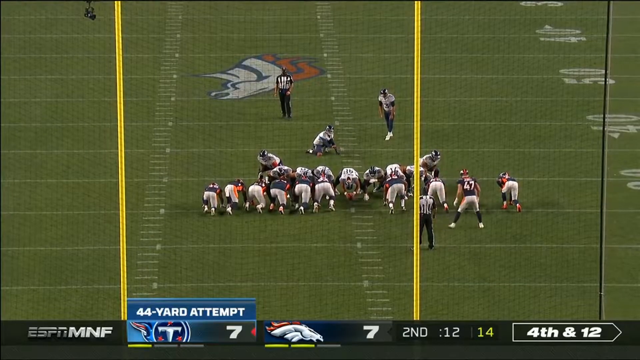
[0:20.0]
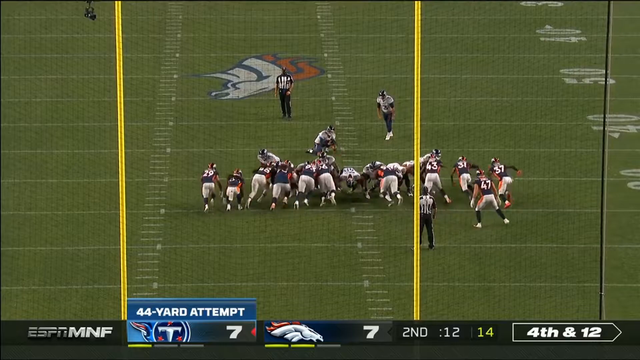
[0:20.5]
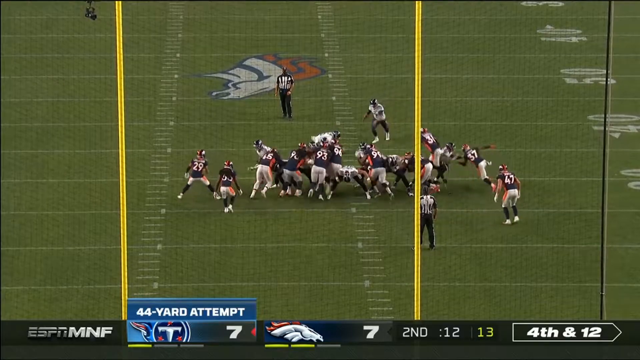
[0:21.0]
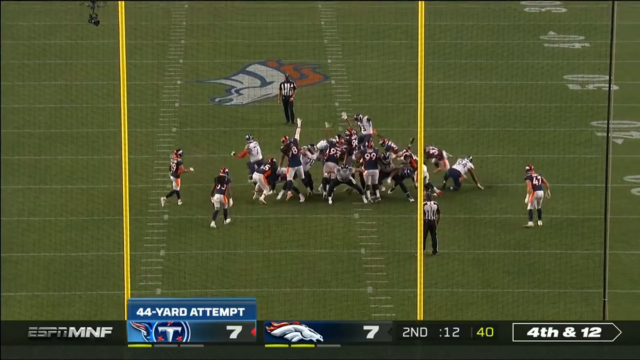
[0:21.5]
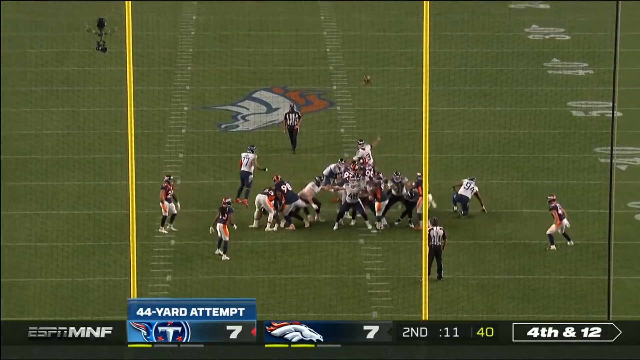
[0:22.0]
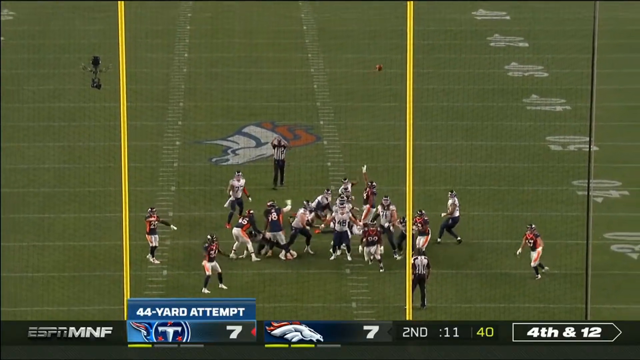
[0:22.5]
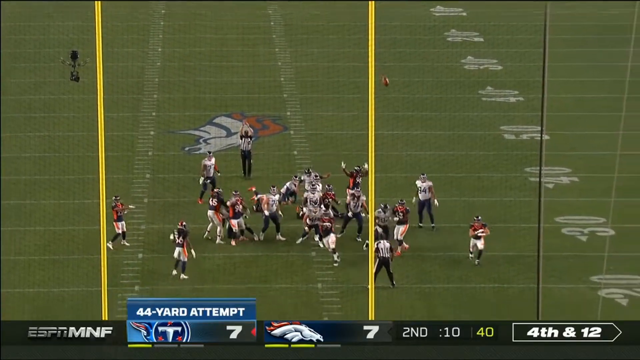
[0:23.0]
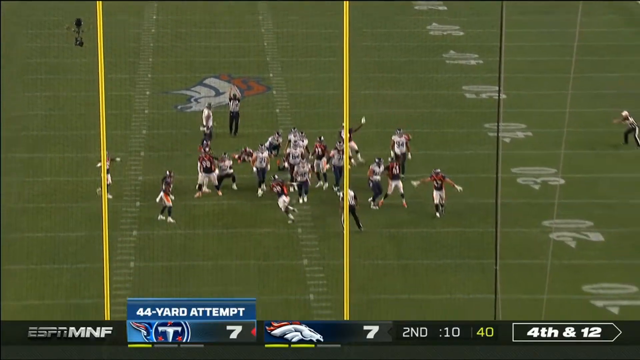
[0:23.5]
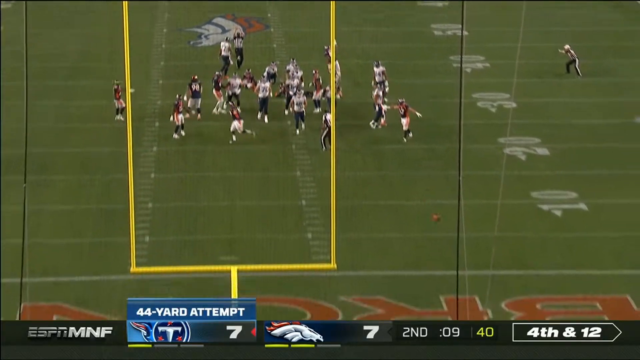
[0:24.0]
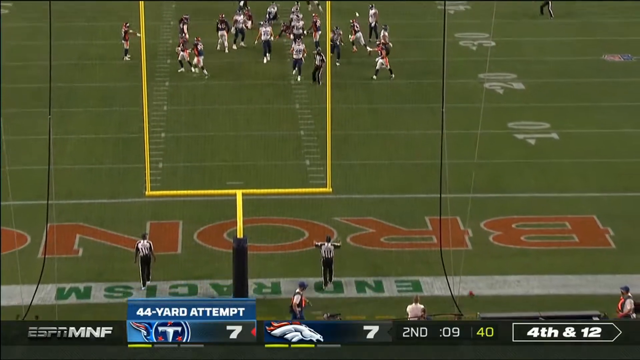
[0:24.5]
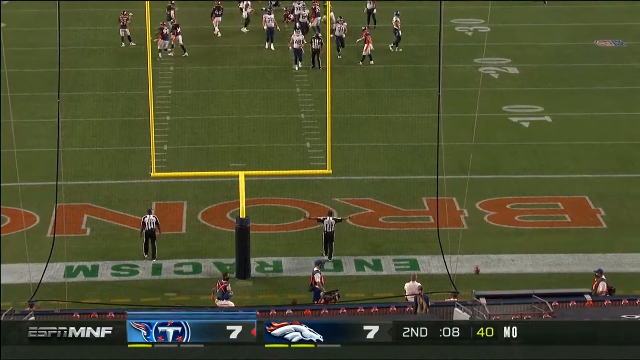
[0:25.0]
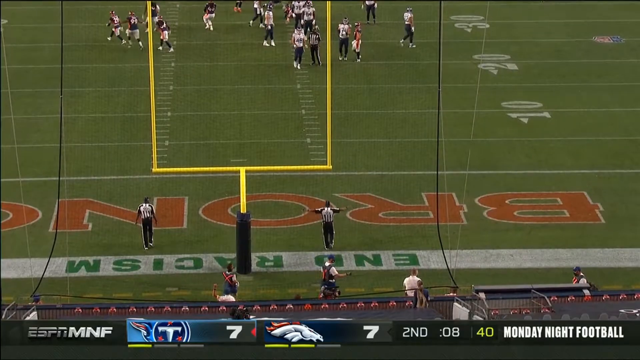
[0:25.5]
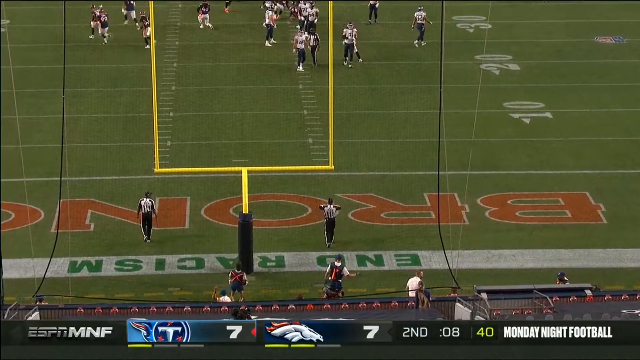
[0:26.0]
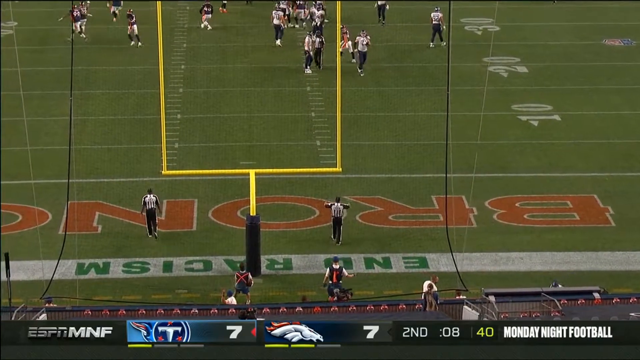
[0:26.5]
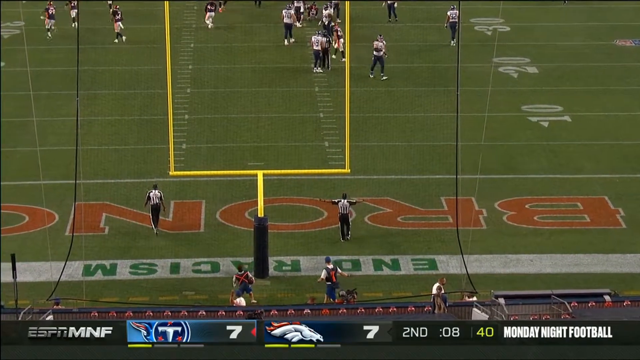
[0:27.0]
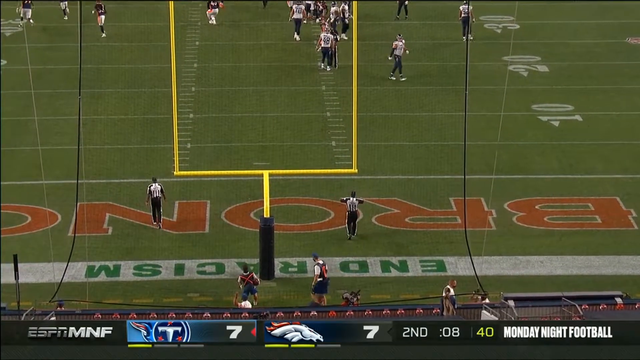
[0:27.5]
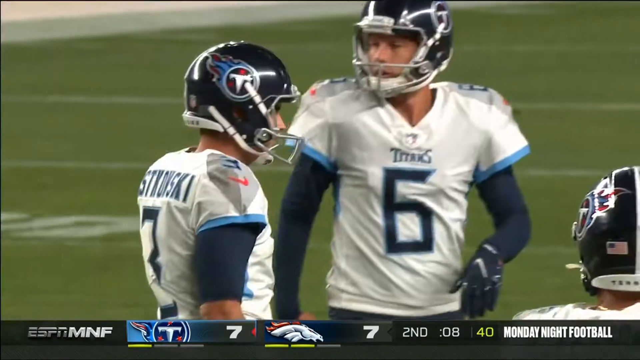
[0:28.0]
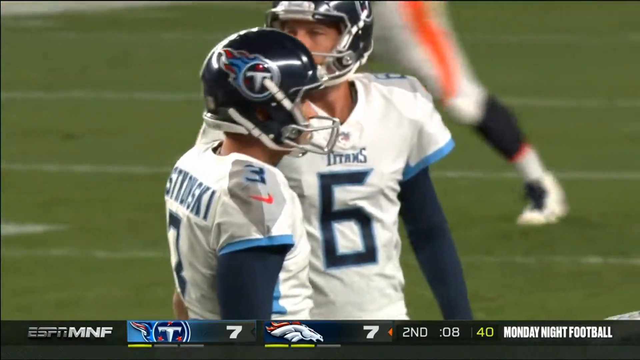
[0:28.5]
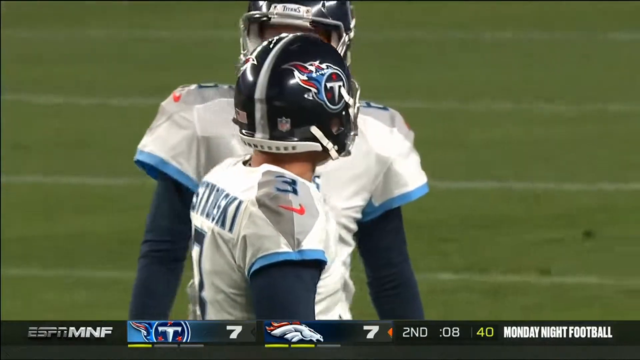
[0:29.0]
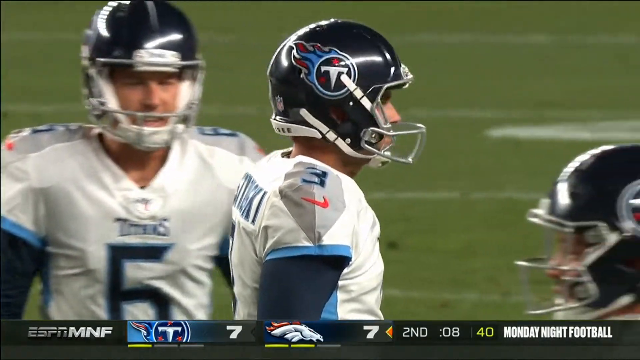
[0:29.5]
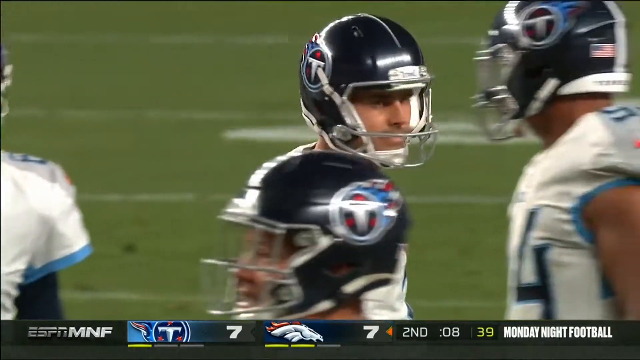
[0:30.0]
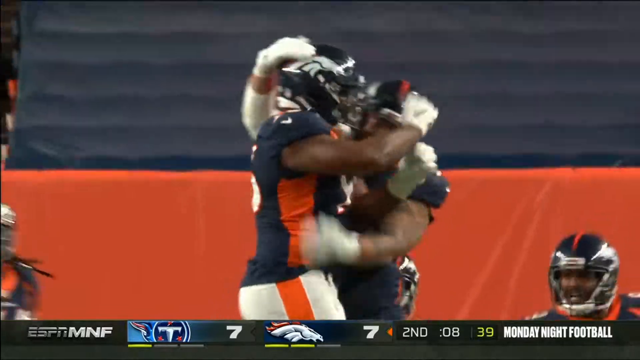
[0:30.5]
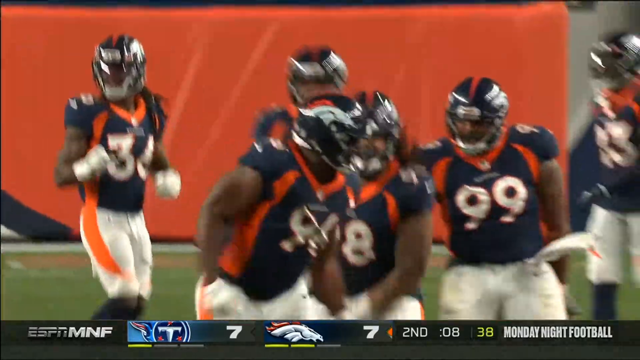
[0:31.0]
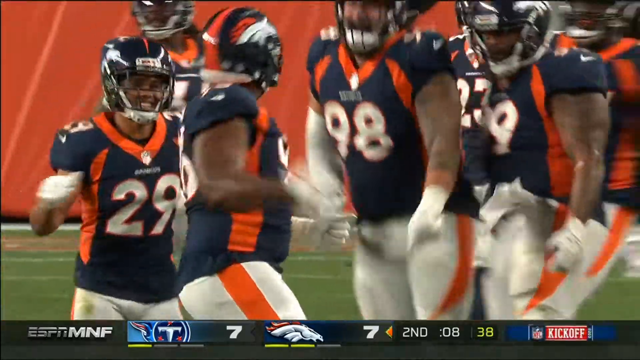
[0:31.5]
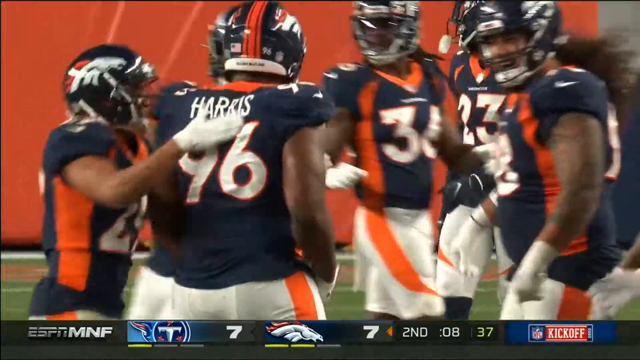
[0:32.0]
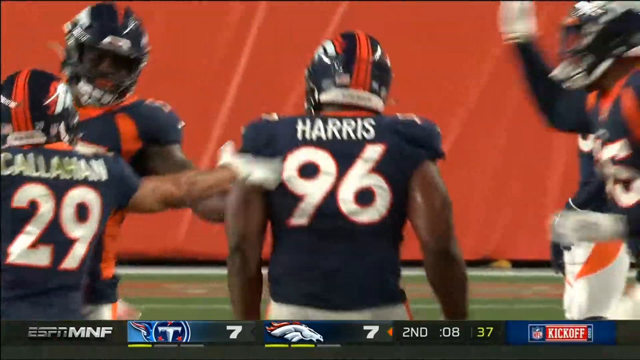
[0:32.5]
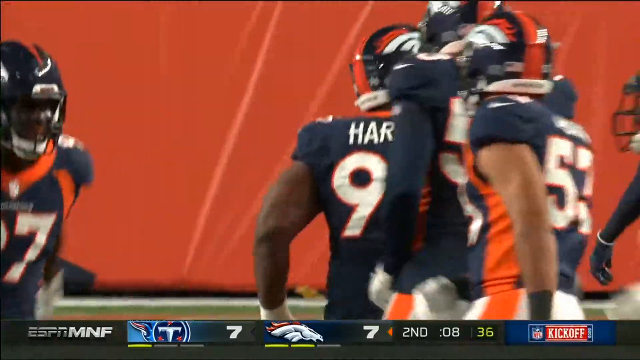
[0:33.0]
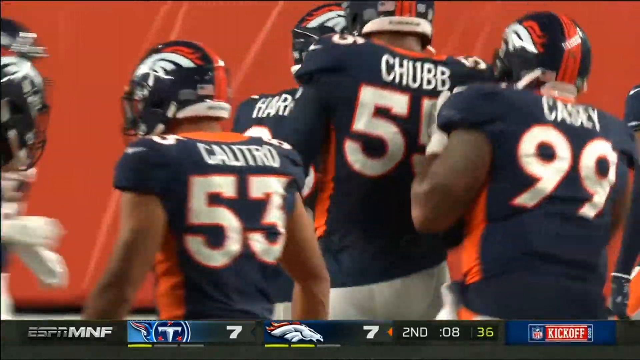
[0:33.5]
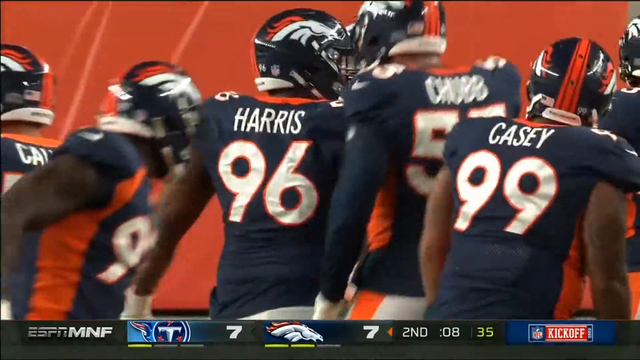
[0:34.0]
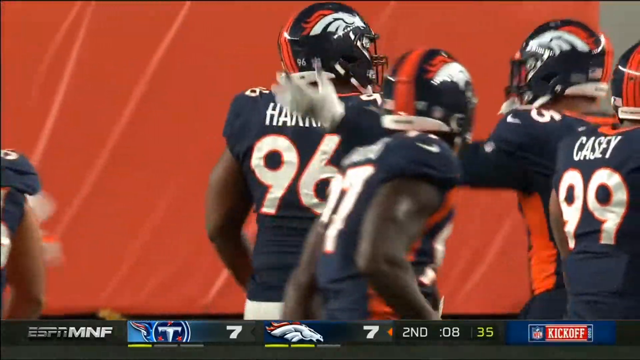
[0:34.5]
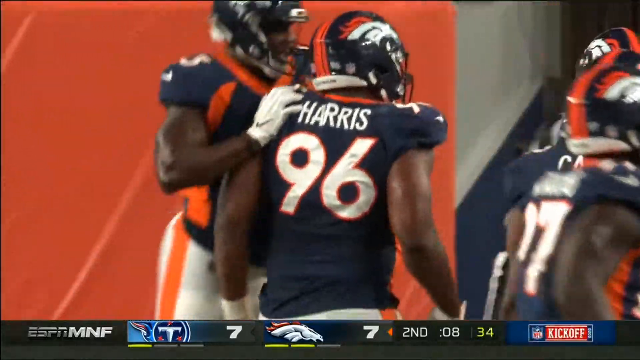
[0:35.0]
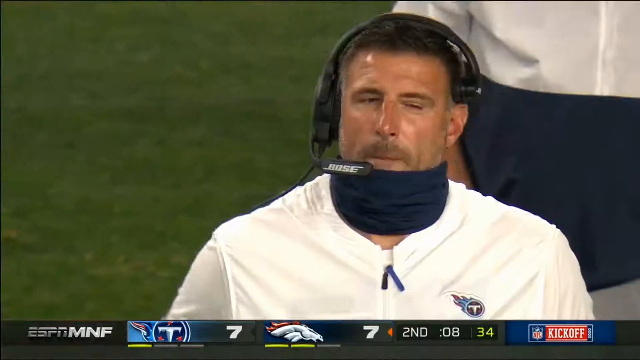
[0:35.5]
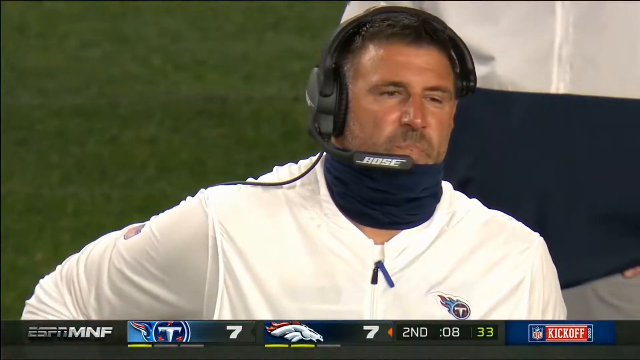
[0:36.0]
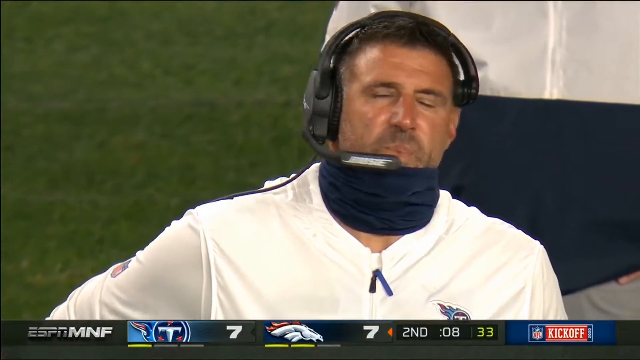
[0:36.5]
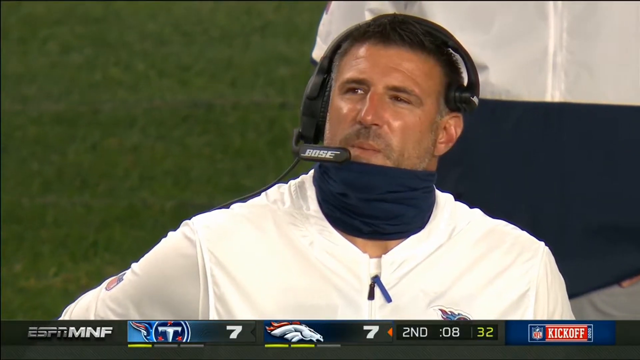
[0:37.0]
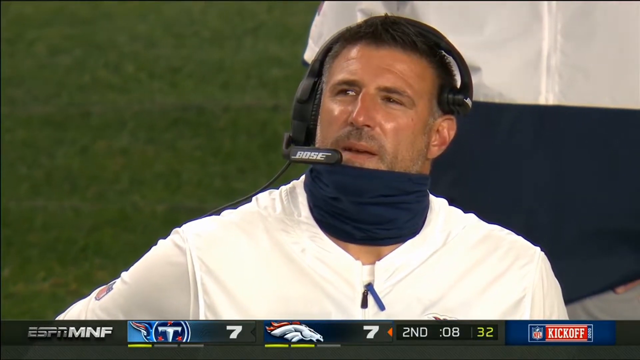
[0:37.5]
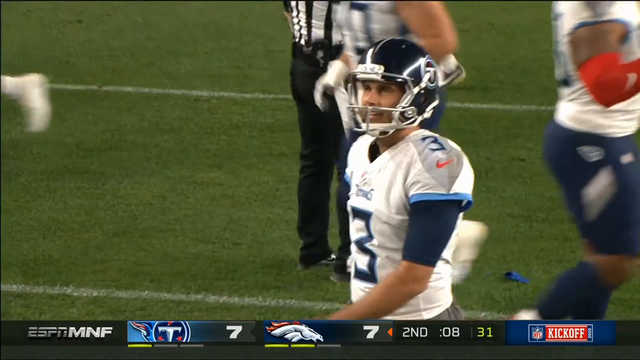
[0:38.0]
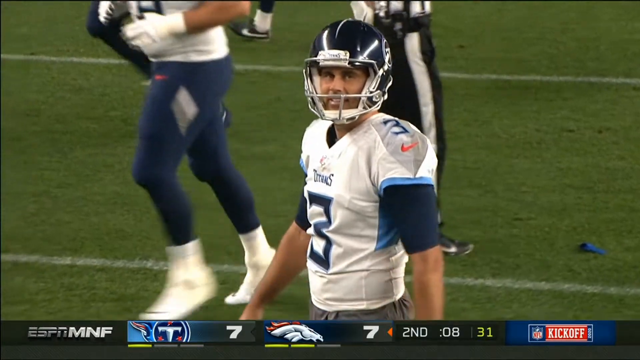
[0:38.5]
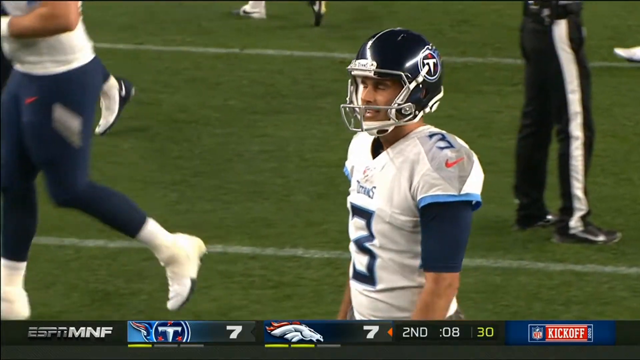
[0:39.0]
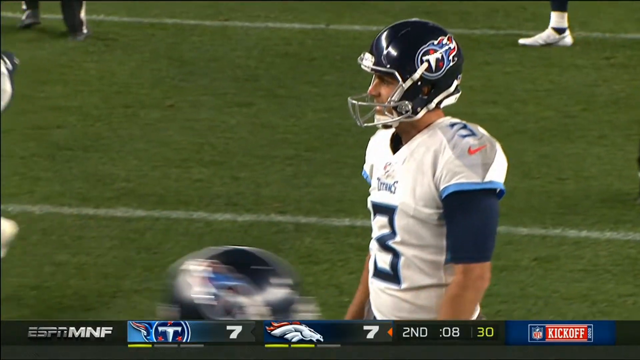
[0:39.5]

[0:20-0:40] The center kicks or pitches out the ball. The field goal kicker lines up toward the center and then runs toward the ball as the placeholder grabs the ball from the center. After the windup, the football is kicked and rotates through the air toward the field goal, spinning very fast toward what appears to be outside the pole. The 47-yard attempt is unsuccessful, and the referees push their arms out horizontally, crossing them over their chests and extending them out almost as if swimming. Some of the Tennessee Titans players look down, discouraged. A replay follows, showing the snapper sending the ball to the player wearing number six, who holds the football down, and the kicker lining up to hit the ball.